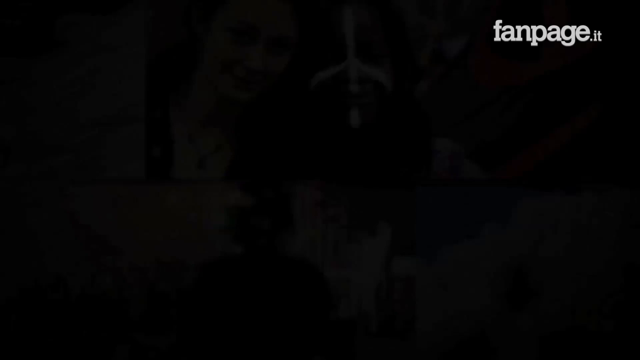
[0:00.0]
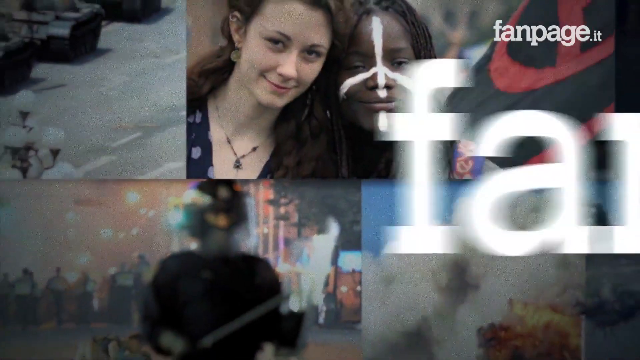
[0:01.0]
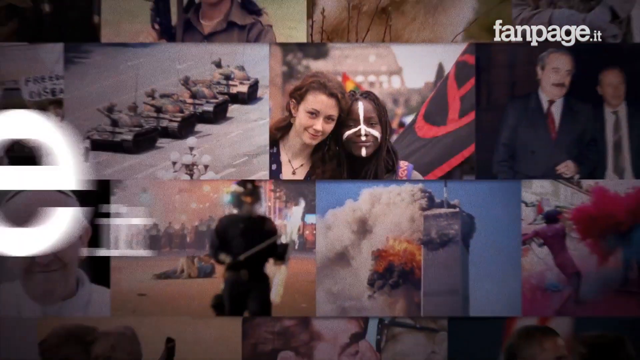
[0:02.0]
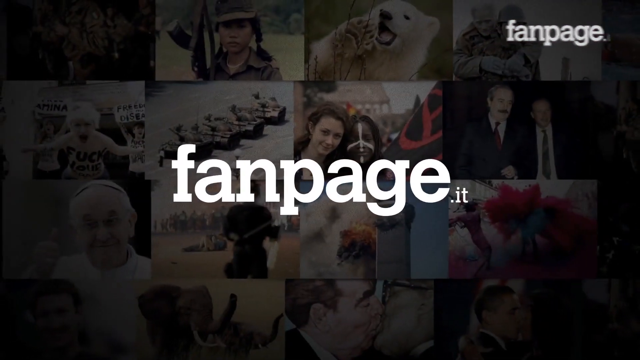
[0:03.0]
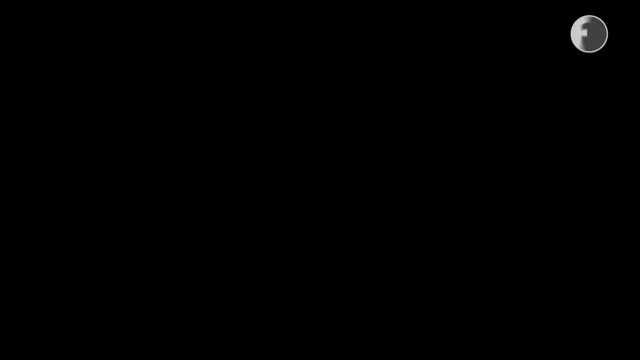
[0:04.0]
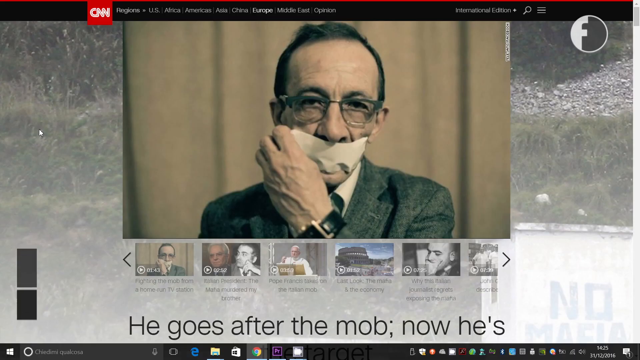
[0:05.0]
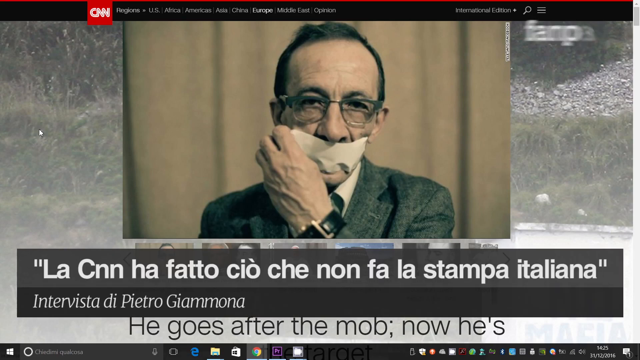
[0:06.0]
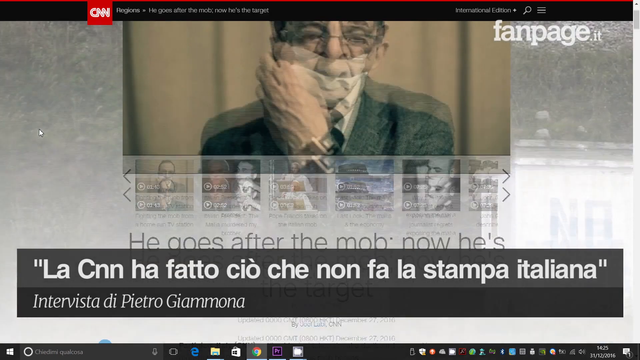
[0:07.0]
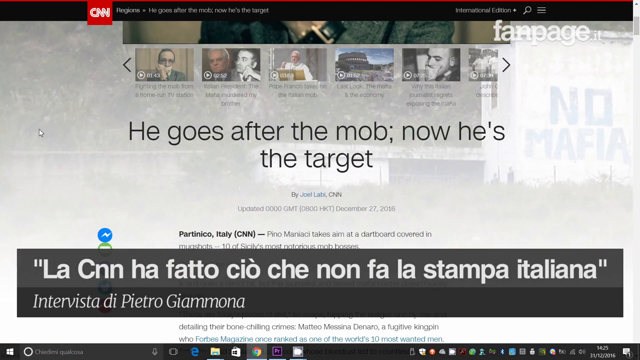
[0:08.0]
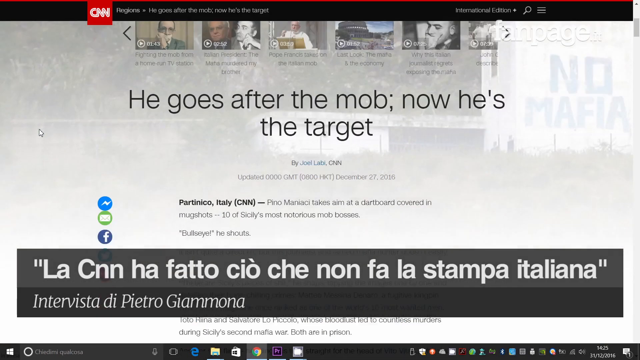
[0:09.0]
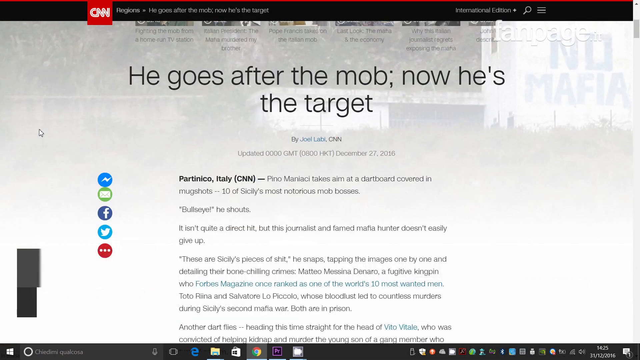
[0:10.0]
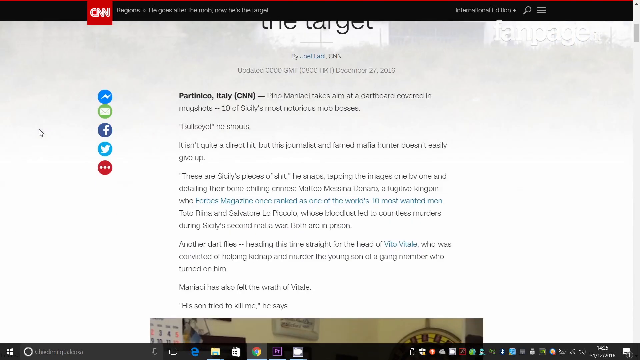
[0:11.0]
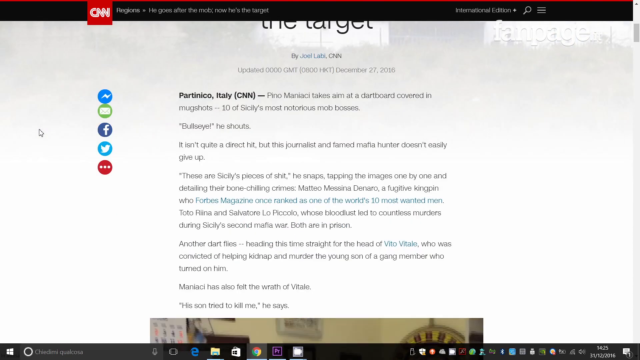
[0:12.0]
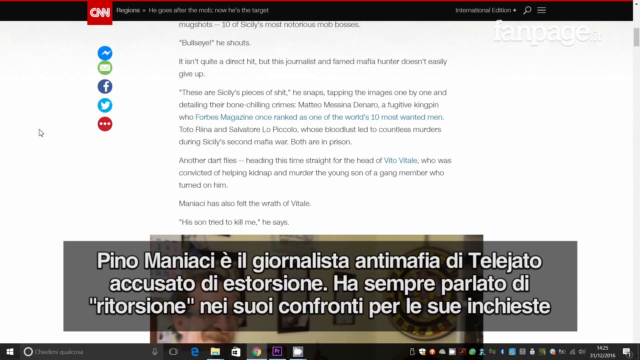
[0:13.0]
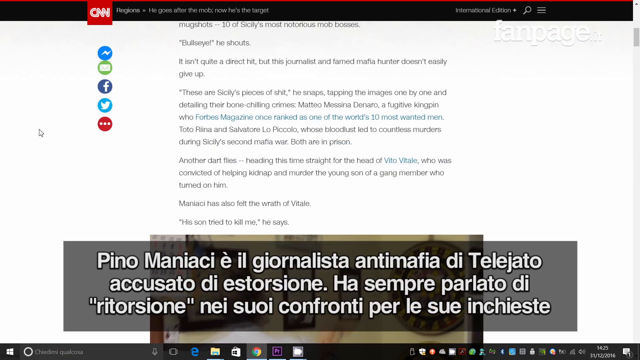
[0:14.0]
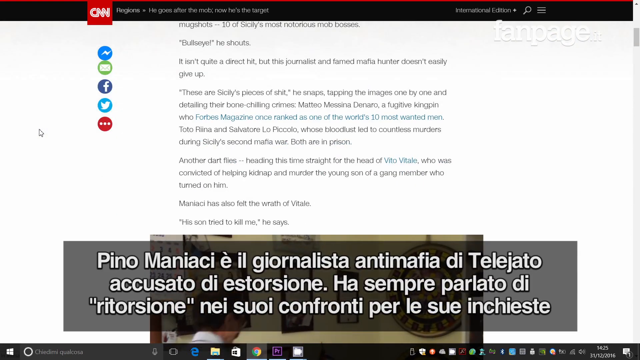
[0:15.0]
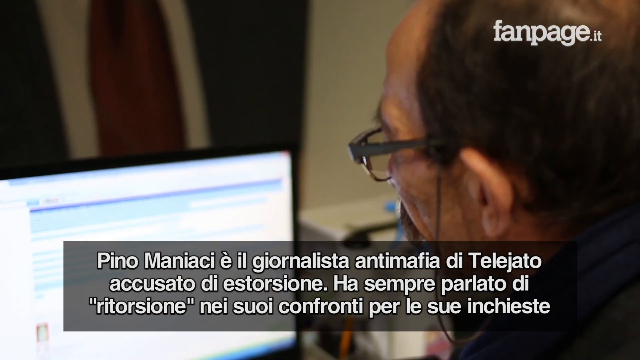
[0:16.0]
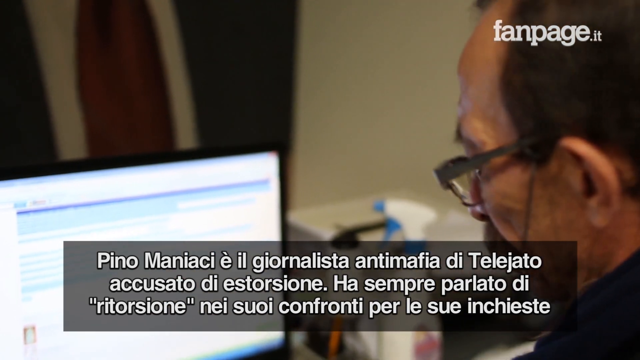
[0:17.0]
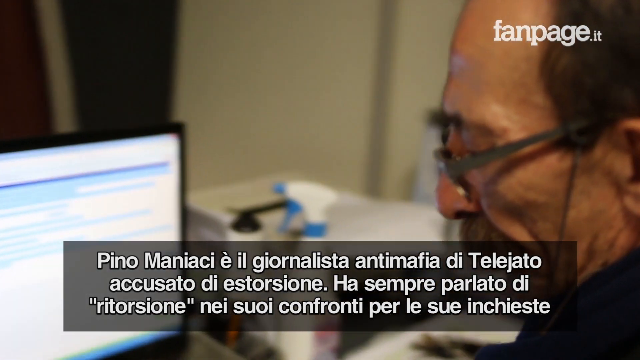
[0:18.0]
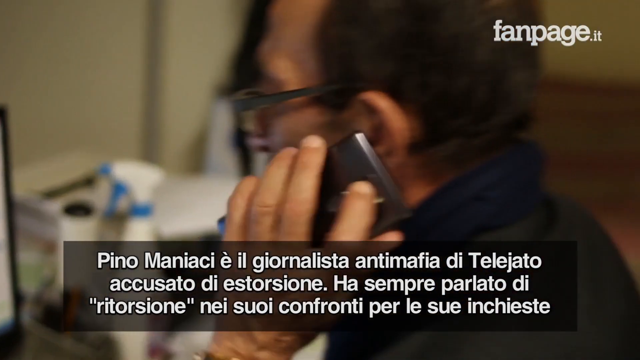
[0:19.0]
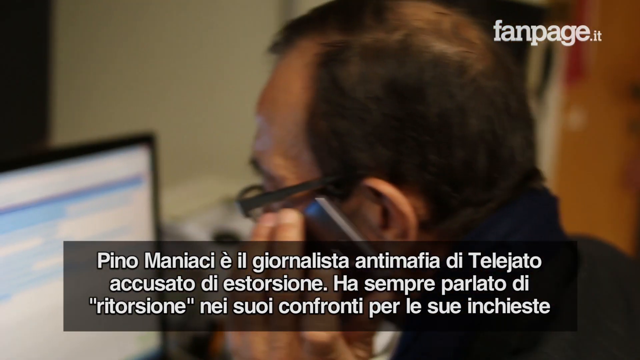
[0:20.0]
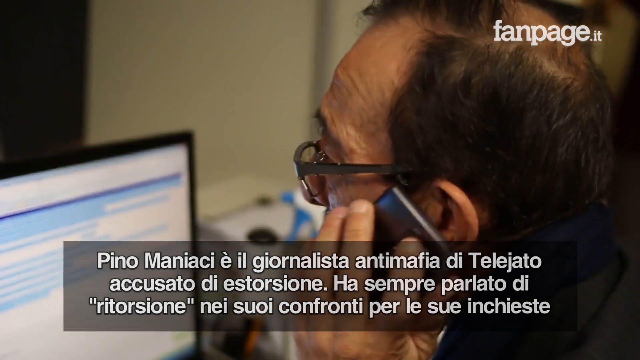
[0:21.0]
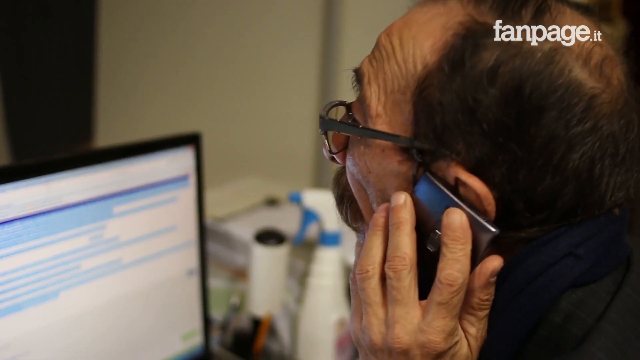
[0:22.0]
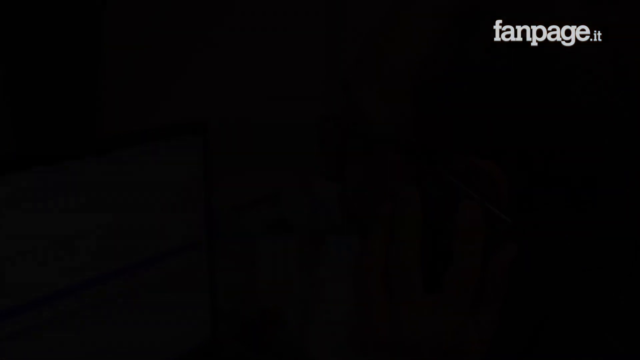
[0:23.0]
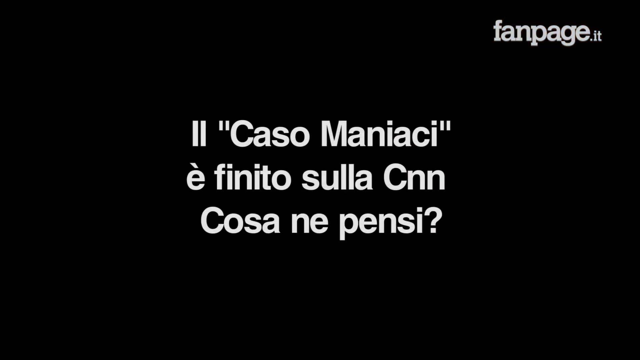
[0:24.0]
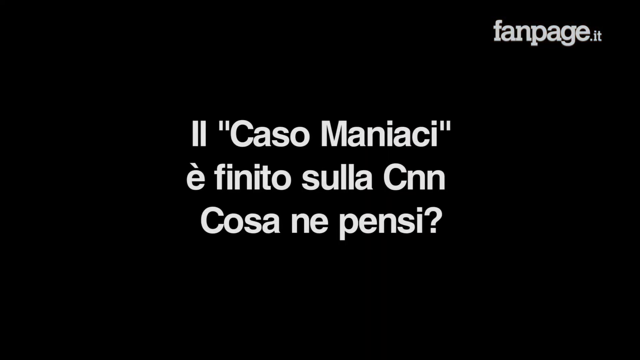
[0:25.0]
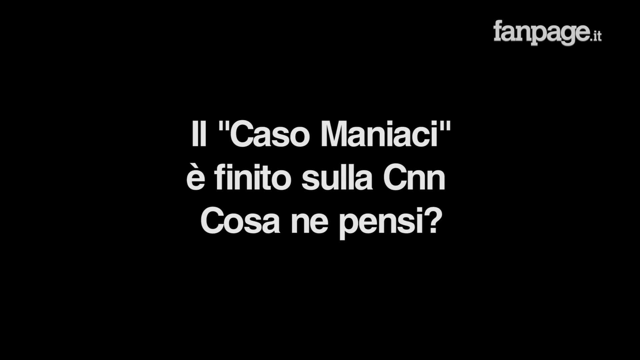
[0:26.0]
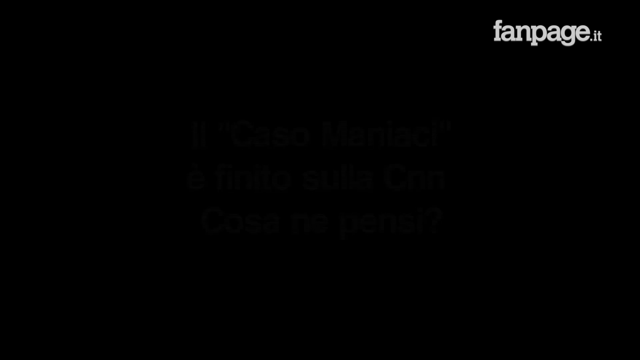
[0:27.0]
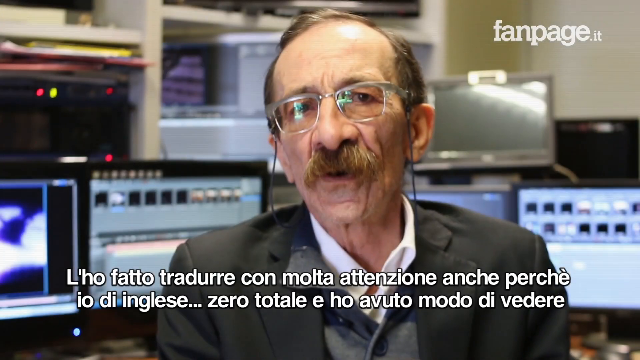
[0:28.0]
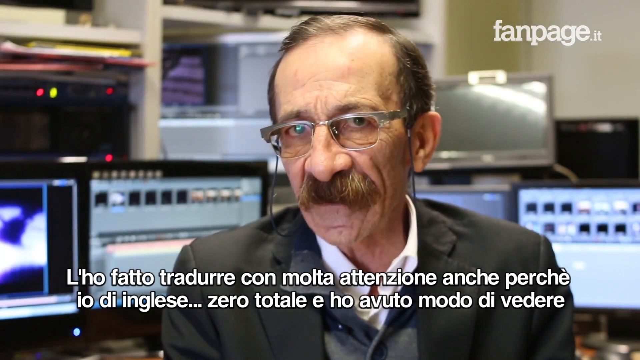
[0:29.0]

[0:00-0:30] An introduction screen shows a number of photos stitched together in the background. The most prominent one shows a white girl wearing a necklace and a black girl with a white cross drawn on her face, smiling and standing next to each other. The photo zooms out, revealing photos of tanks, politicians and other scenes. "Fanpage.it" appears on the screen. The story begins on a CNN website page, with an Italian-language information bar at the bottom. An old man is on the screen; he has short hair with a receding hairline and wears glasses. White paper or tape covers his mouth, and he holds his left arm across his body toward it, as if holding it there or about to remove it. The page scrolls down to reveal the English text "He goes after the mob. Now he's the target." A news story written in English is on the CNN page, and Italian subtitles appear at the bottom. The same old man is then shown standing in side profile at a laptop, wearing glasses. He picks up a mobile phone with his left hand, holds it to his left ear and talks into it. The screen goes black and Italian text appears, posing a question. The man is then back on screen, wearing glasses and with a large moustache, talking to the camera.